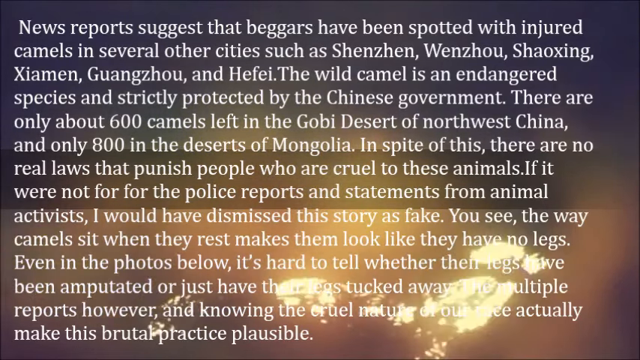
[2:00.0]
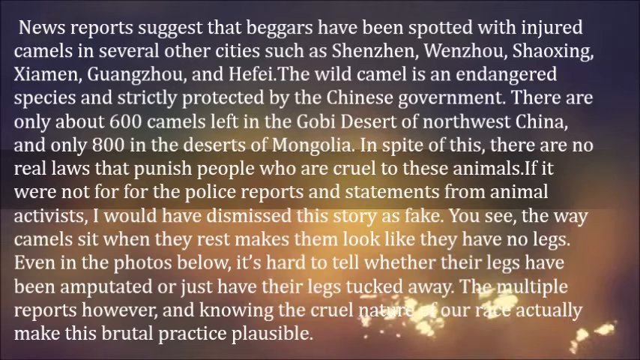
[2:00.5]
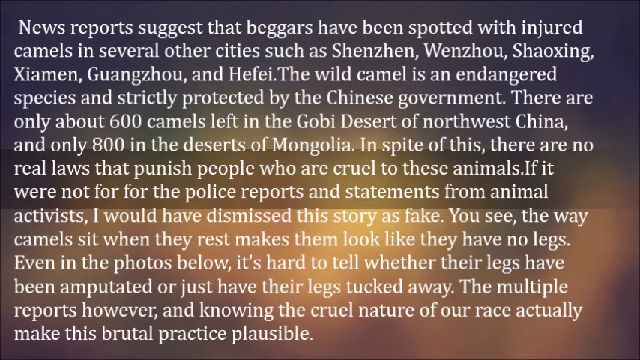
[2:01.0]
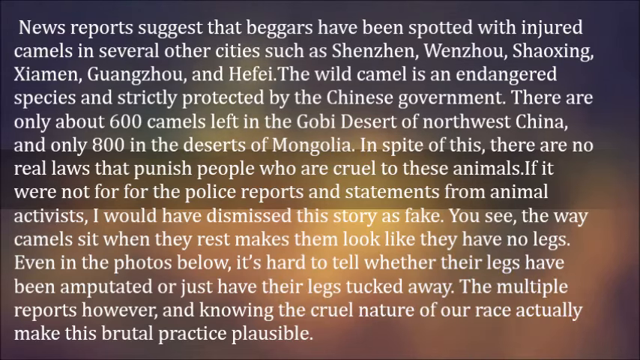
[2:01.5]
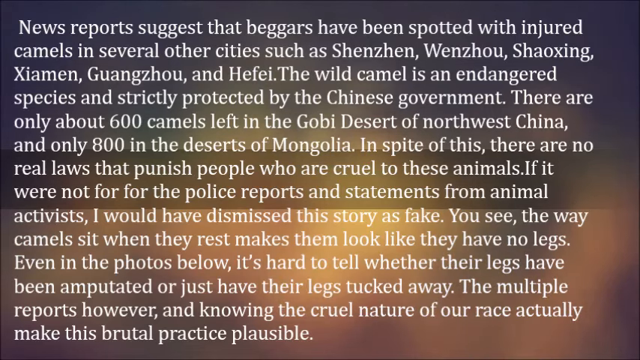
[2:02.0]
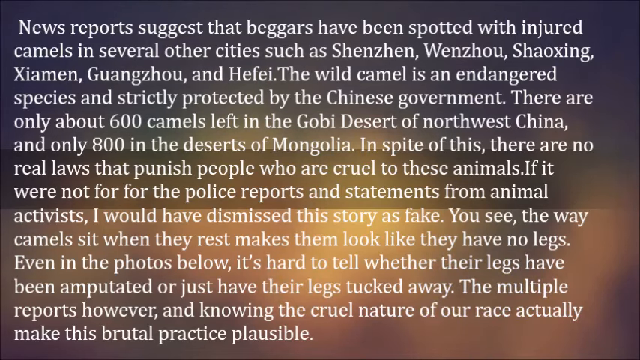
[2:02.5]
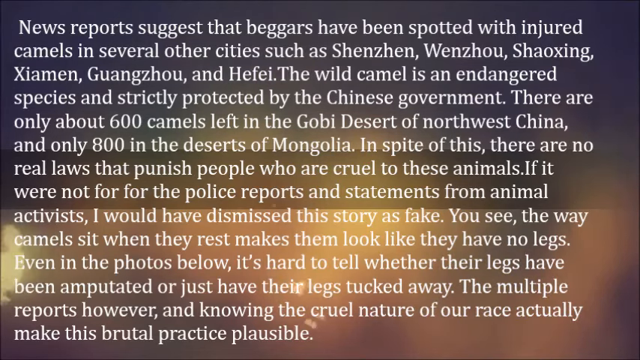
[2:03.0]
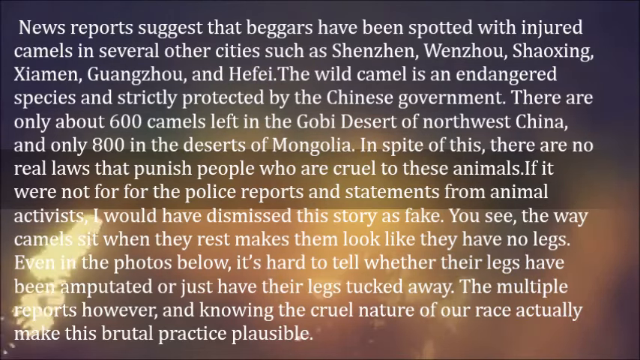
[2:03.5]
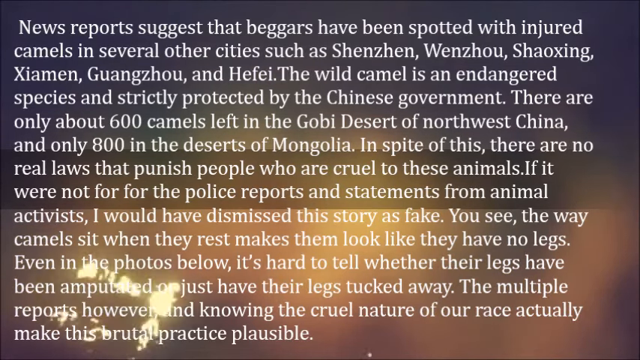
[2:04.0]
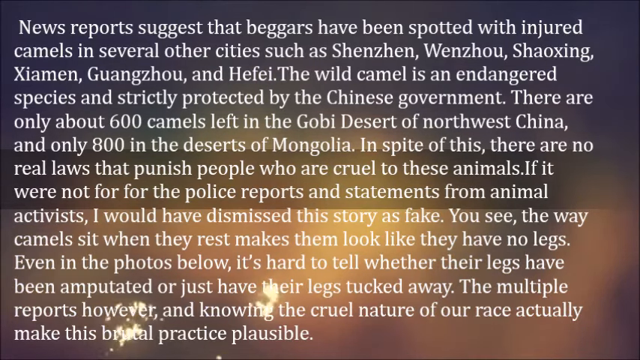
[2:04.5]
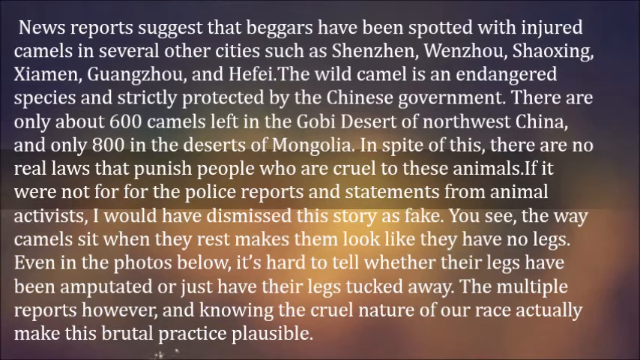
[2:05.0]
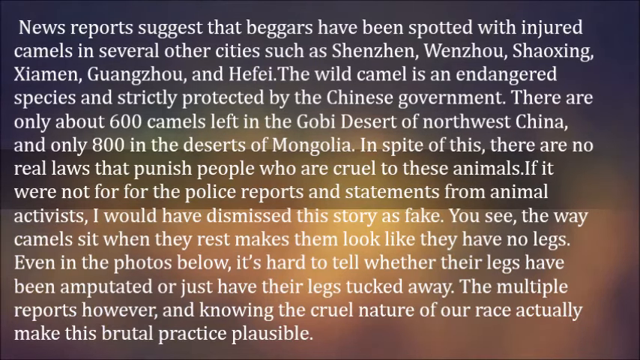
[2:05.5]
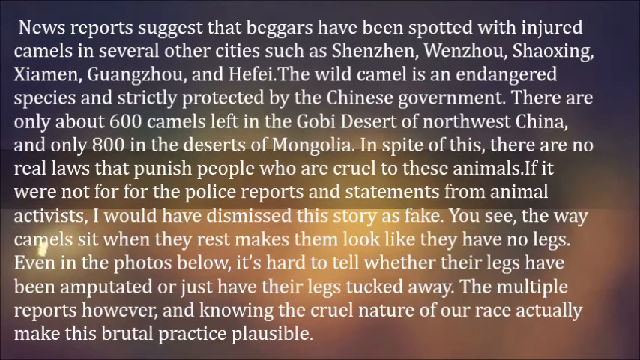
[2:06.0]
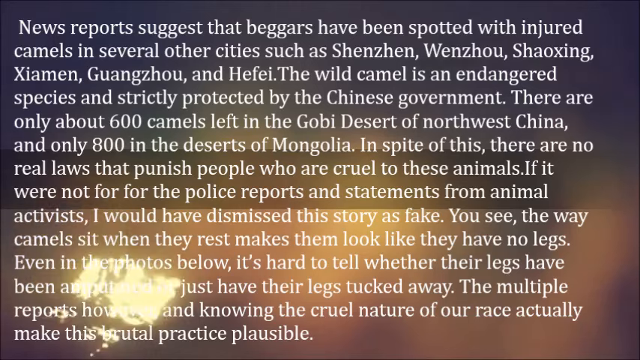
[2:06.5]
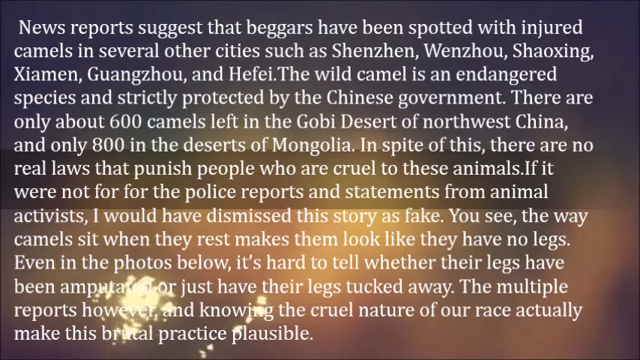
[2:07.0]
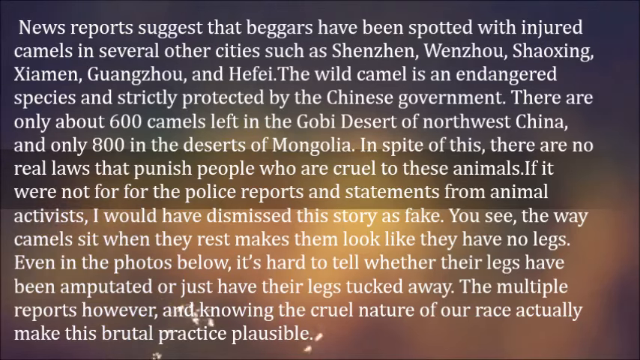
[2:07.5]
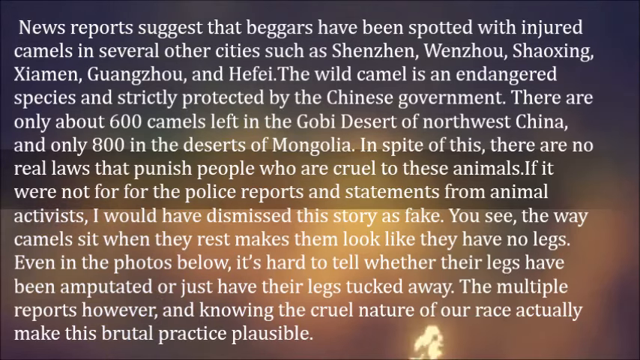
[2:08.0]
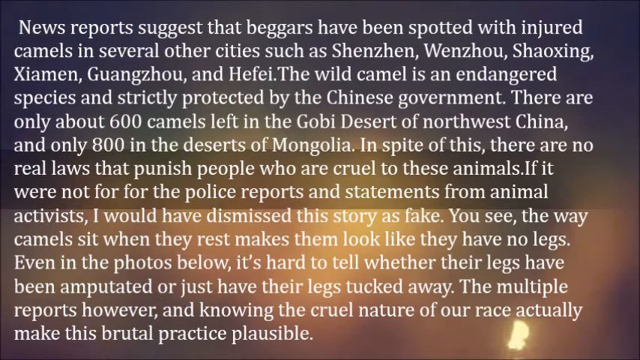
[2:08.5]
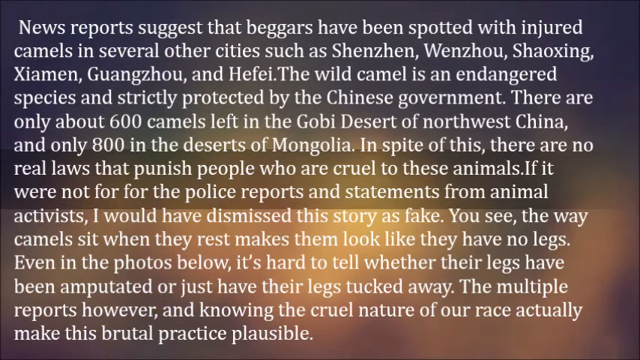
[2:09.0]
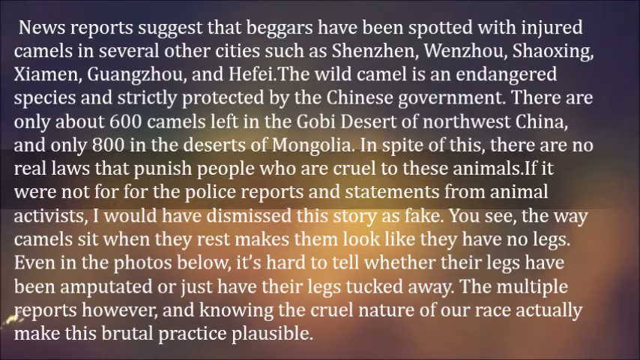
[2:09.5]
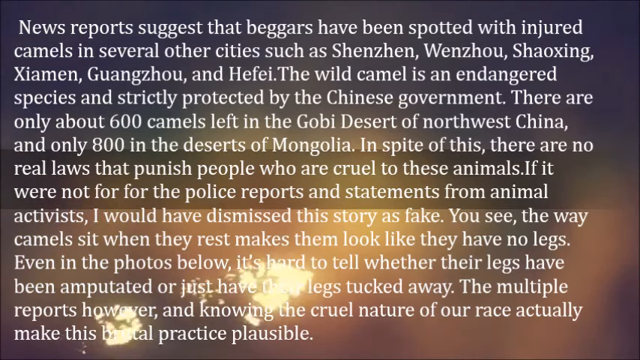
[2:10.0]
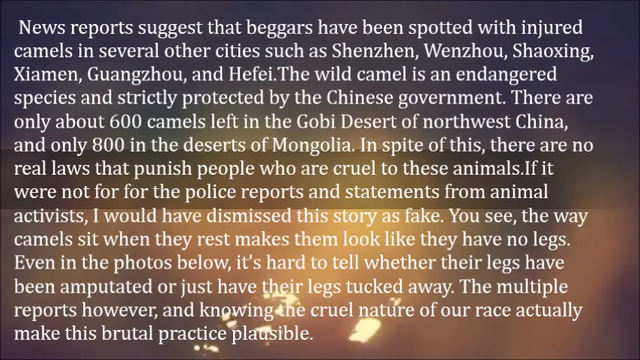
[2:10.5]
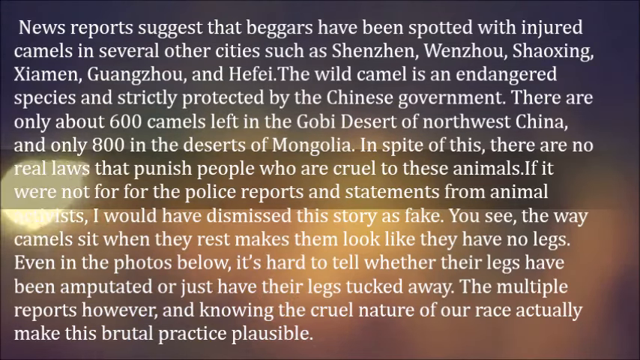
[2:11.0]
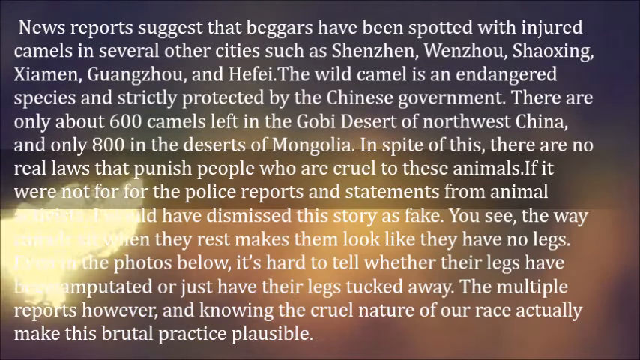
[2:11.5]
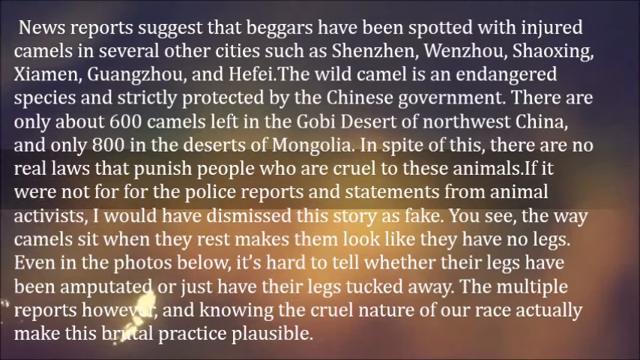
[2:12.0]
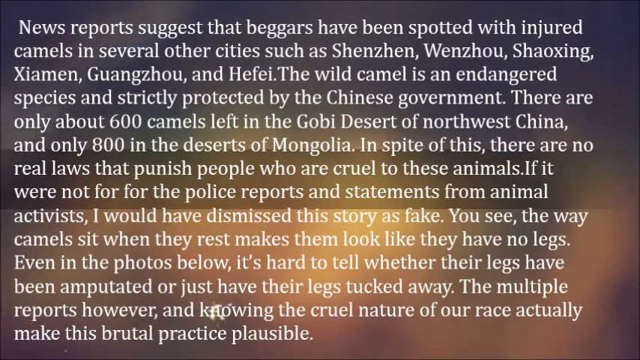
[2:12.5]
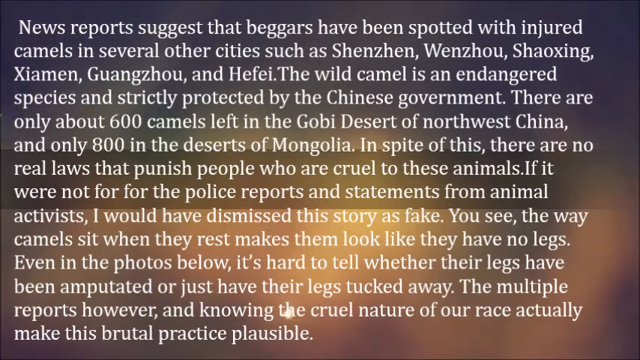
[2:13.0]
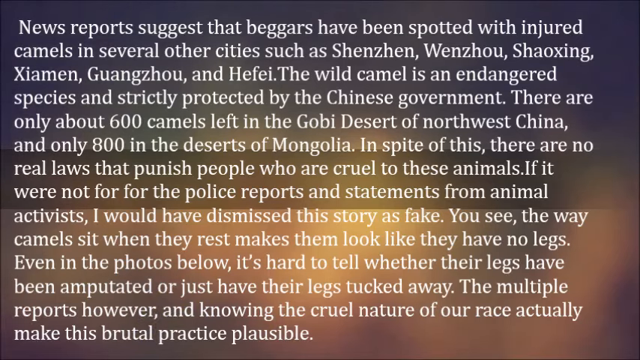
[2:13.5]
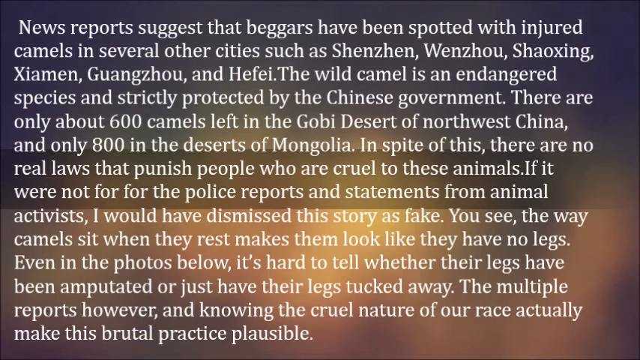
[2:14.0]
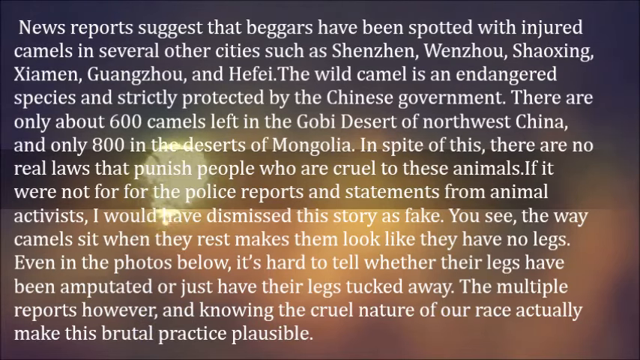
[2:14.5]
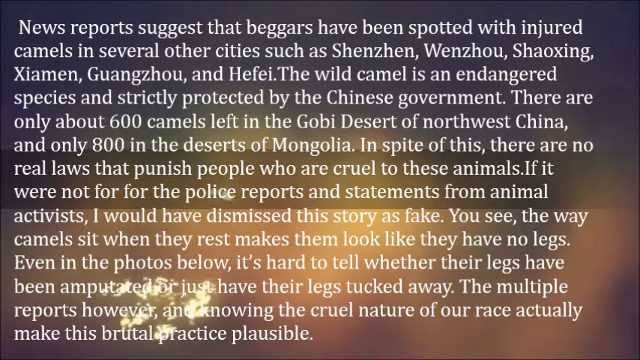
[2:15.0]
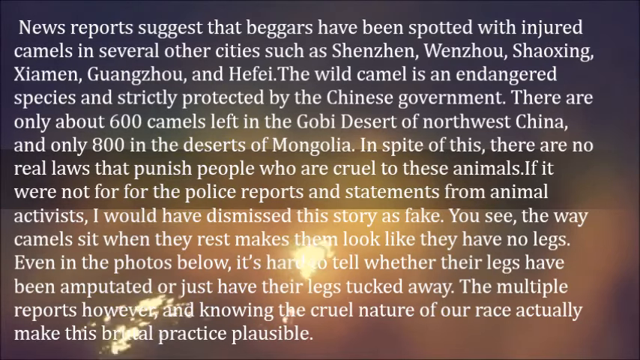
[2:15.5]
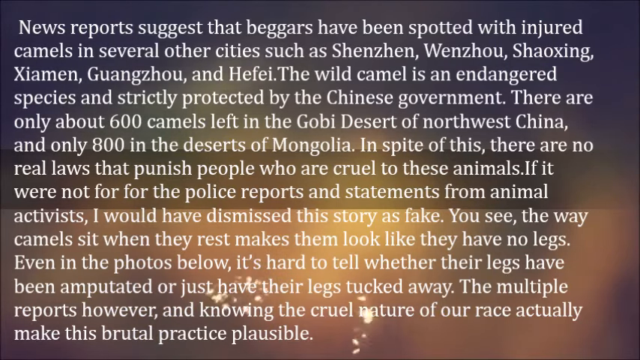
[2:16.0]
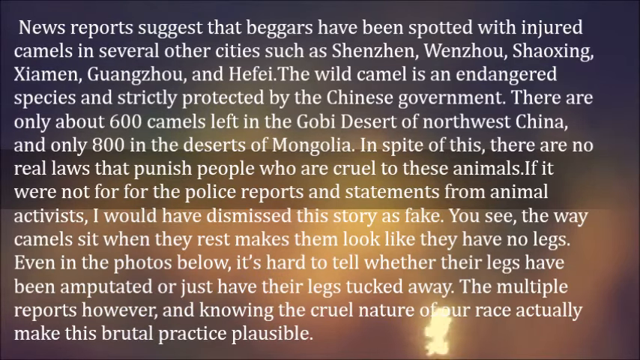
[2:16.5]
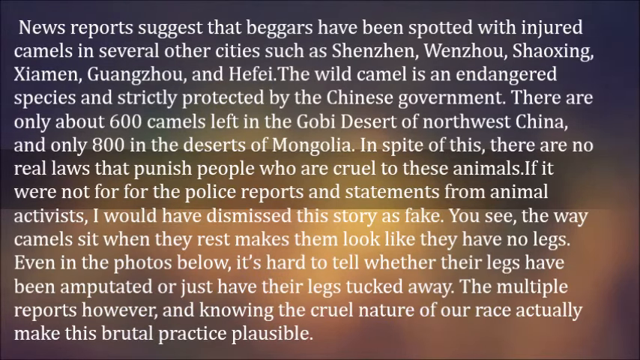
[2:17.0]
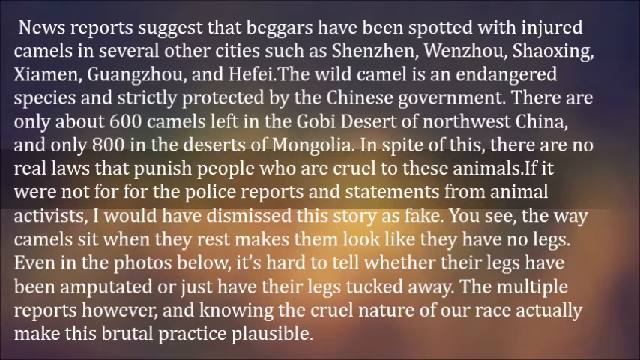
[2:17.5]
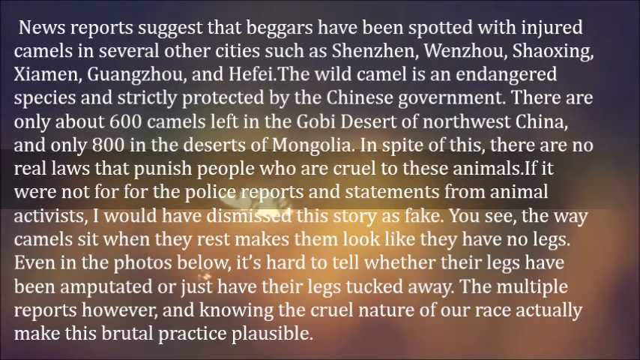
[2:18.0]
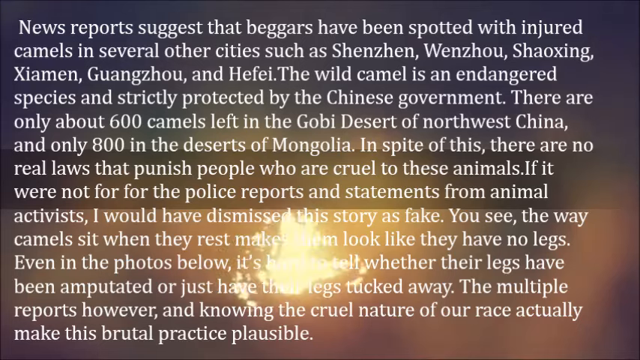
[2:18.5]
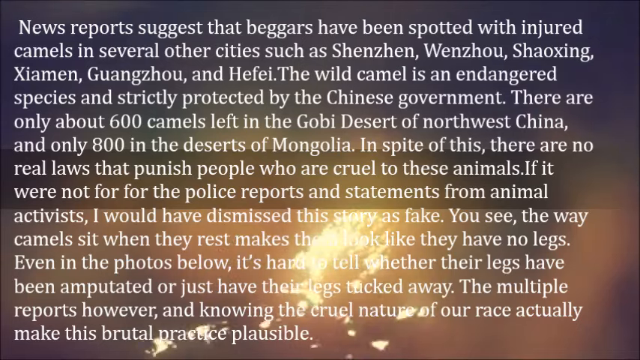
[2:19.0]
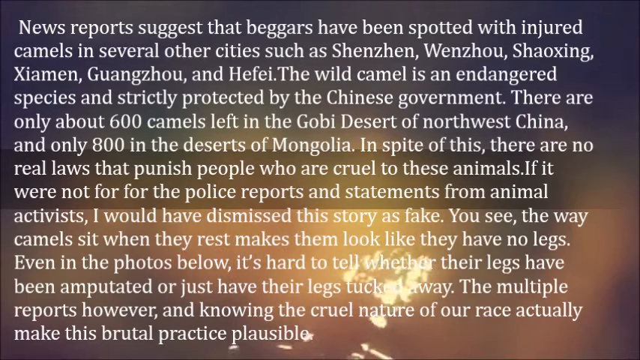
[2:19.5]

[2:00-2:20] The very text-dense paragraph is on the screen, describing the accusations that Chinese beggars deliberately mutilate camels, in some cases cutting off their hooves, to make them appear badly injured, and use them to solicit donations from passersby on the street. The paragraph is set against a multicolored backdrop in various shades of brown, gray and tan with the appearance of water: gold flakes, flecks and irregular shapes move diagonally from left to right and bottom to top. There is no image on the screen other than the water backdrop, and the text consumes the entire screen. The font is white and small, and the video lingers on the lengthy paragraph of multiple sentences for quite some time.